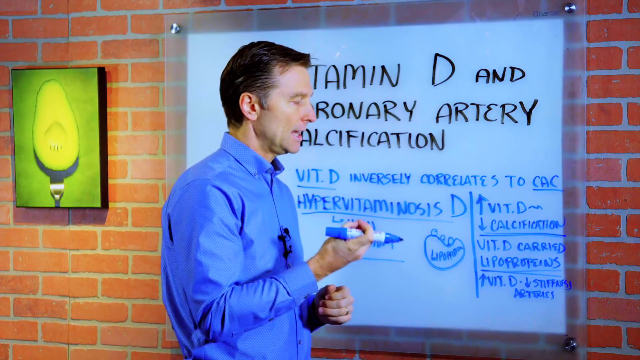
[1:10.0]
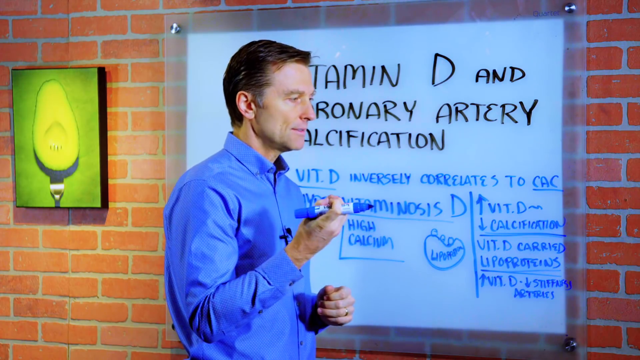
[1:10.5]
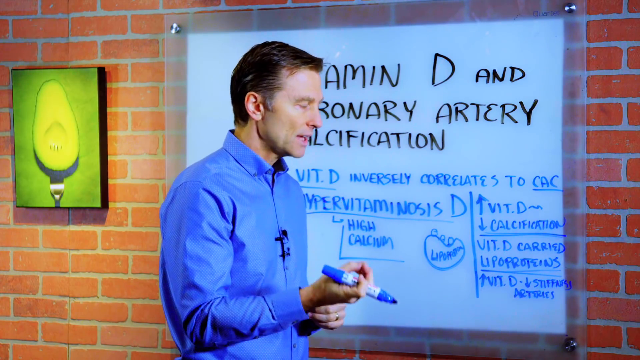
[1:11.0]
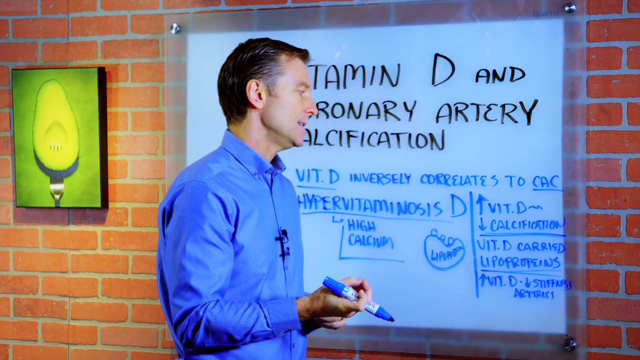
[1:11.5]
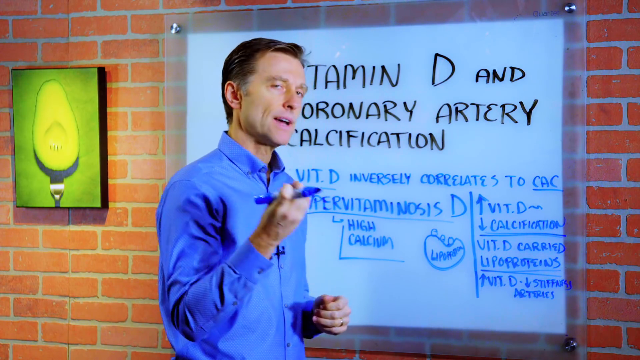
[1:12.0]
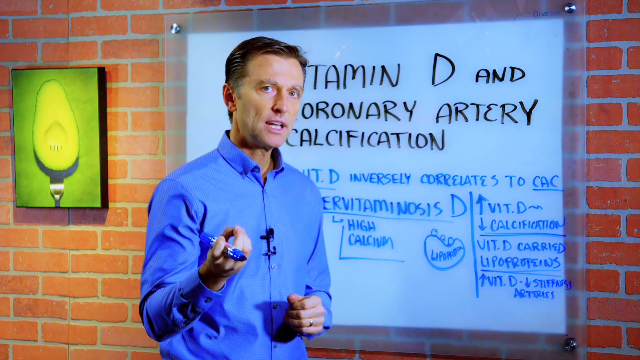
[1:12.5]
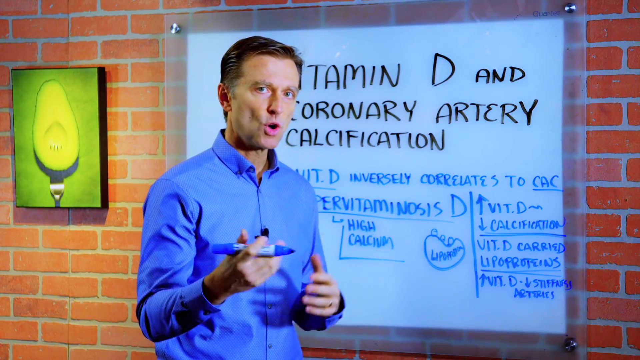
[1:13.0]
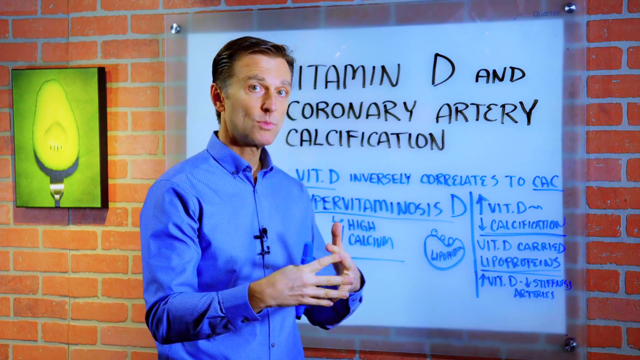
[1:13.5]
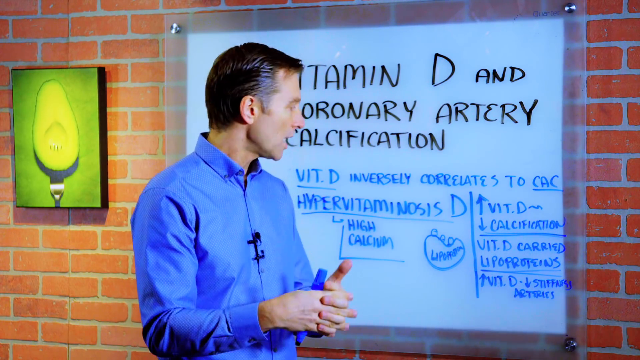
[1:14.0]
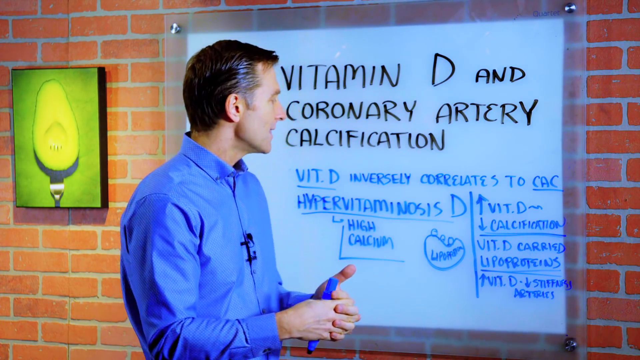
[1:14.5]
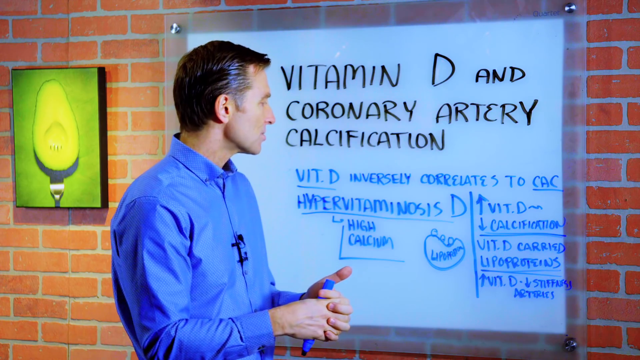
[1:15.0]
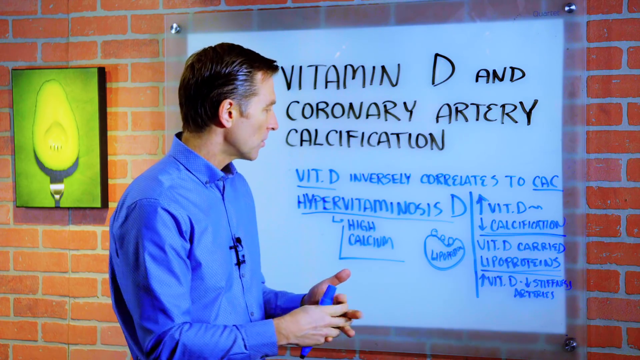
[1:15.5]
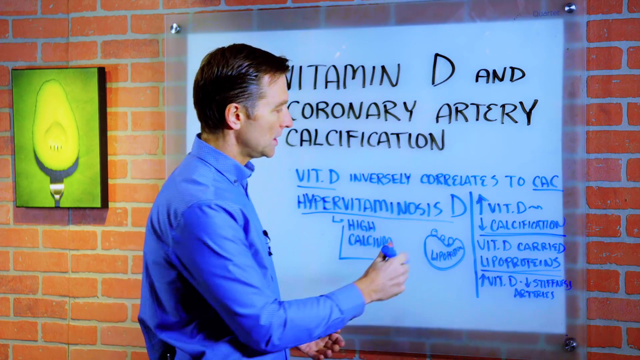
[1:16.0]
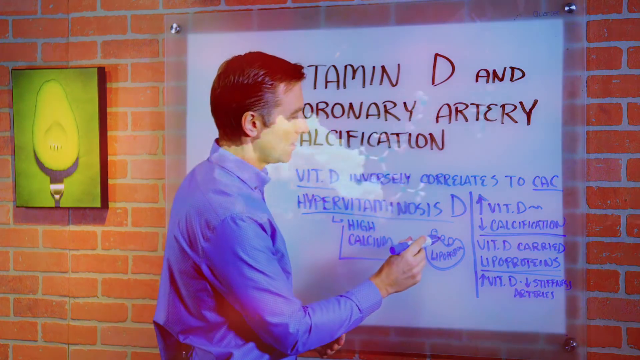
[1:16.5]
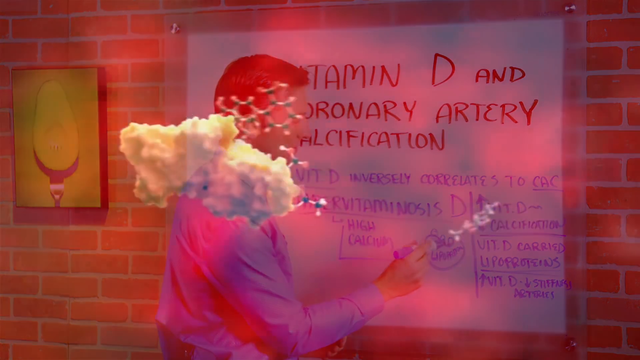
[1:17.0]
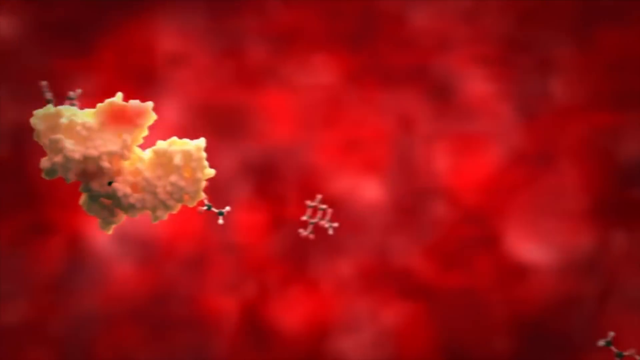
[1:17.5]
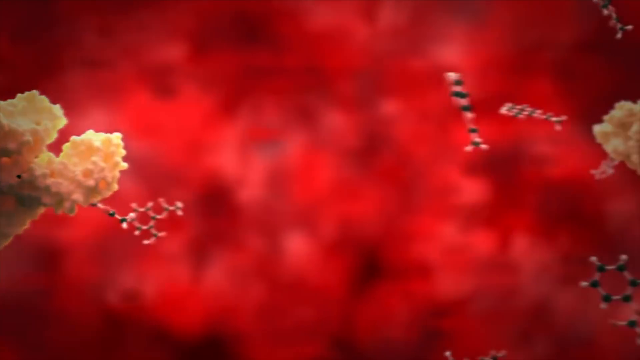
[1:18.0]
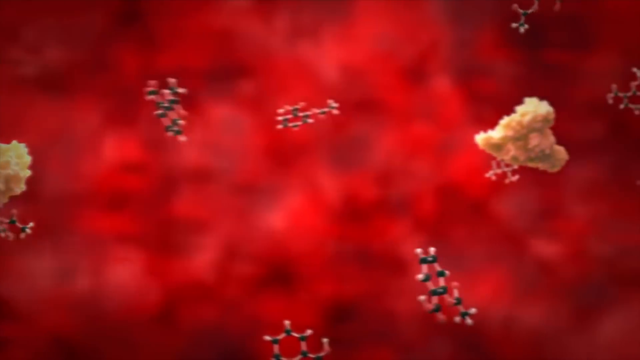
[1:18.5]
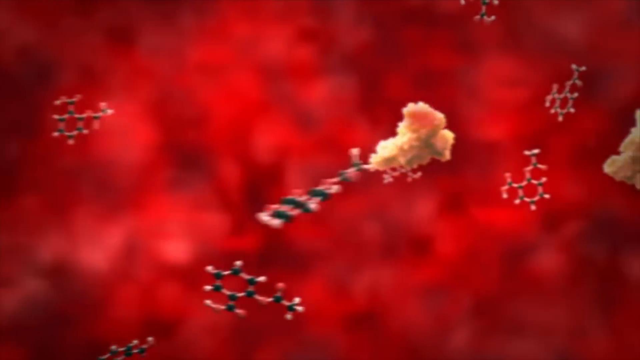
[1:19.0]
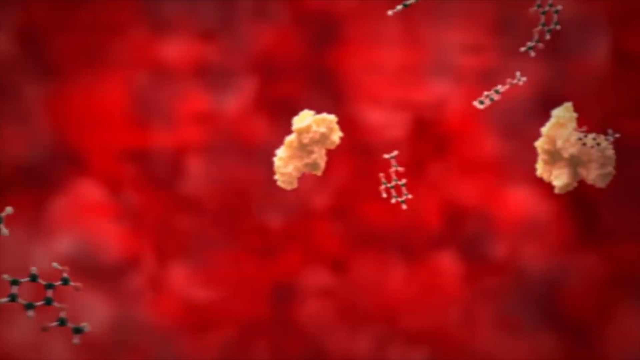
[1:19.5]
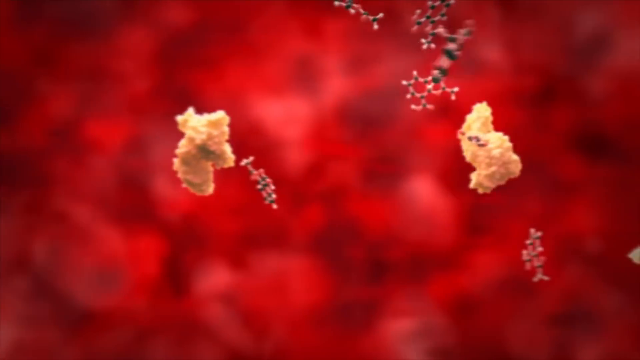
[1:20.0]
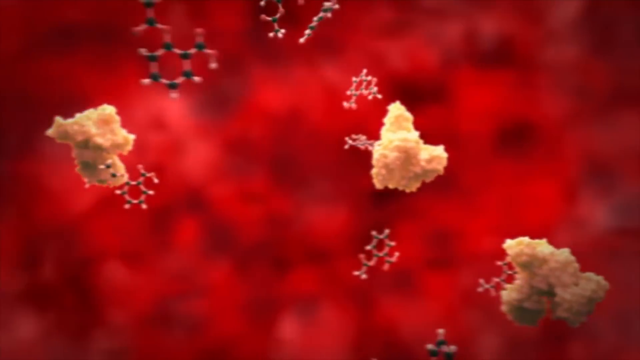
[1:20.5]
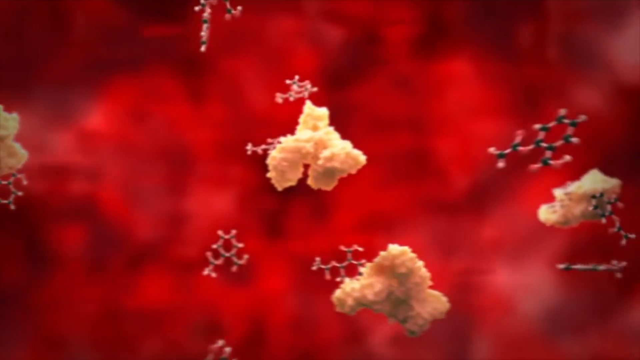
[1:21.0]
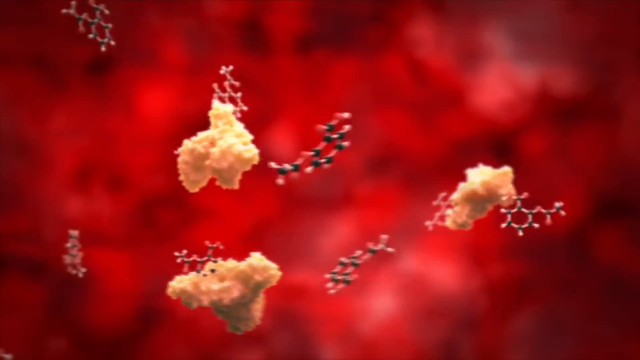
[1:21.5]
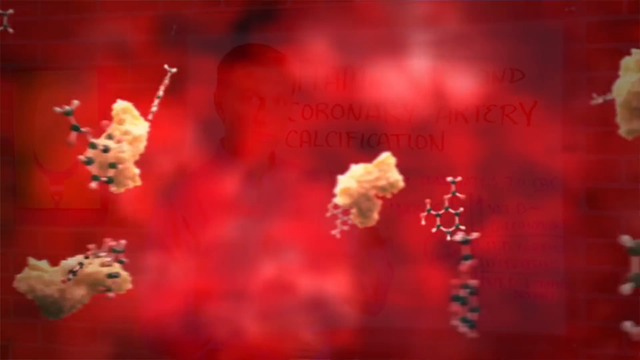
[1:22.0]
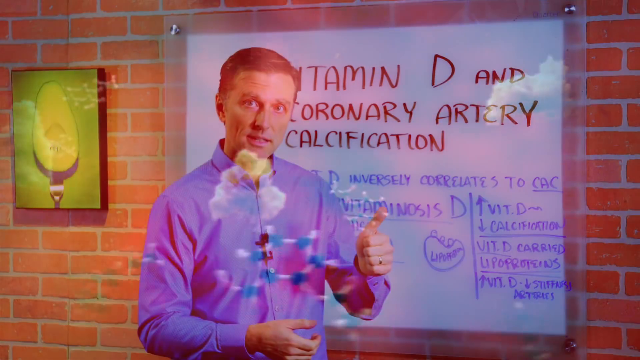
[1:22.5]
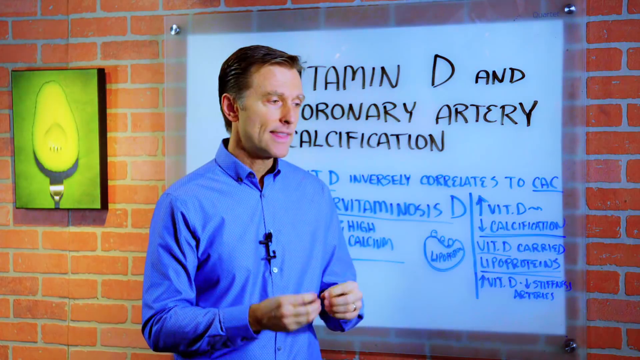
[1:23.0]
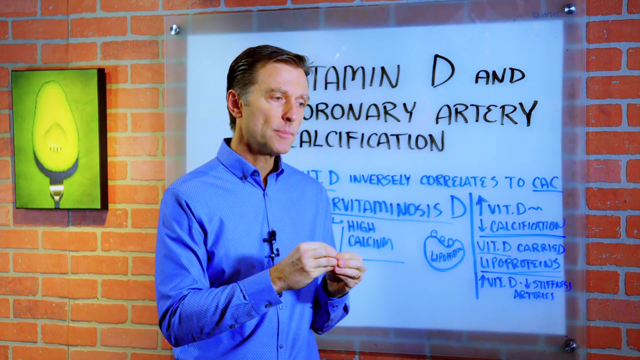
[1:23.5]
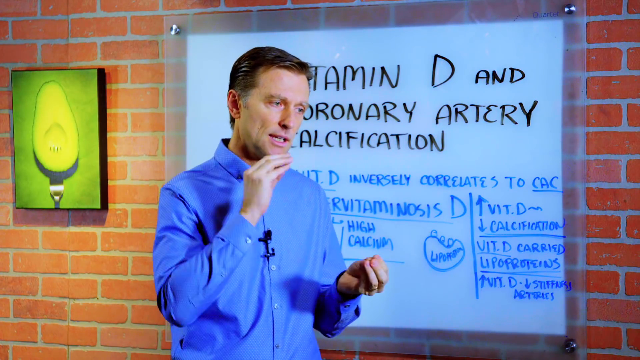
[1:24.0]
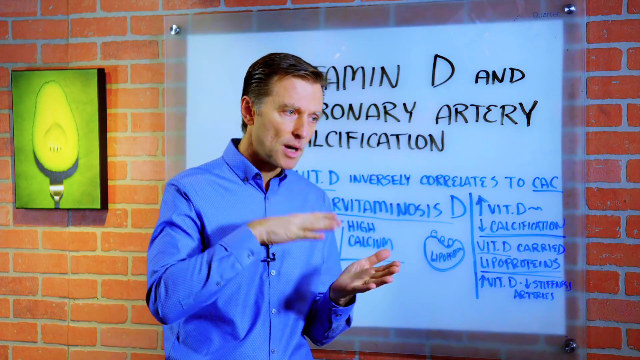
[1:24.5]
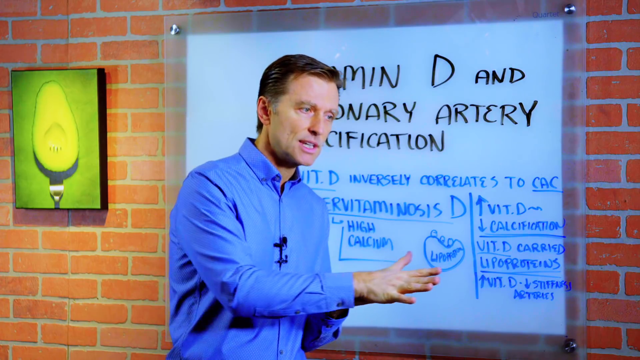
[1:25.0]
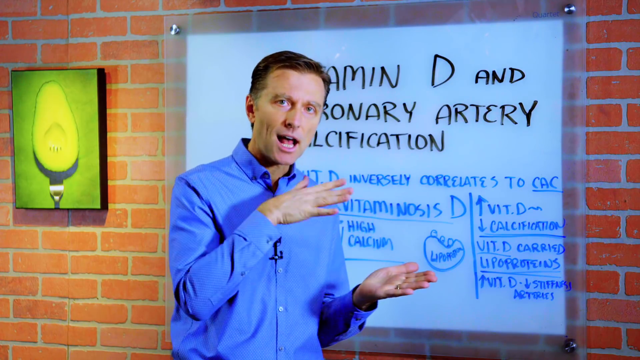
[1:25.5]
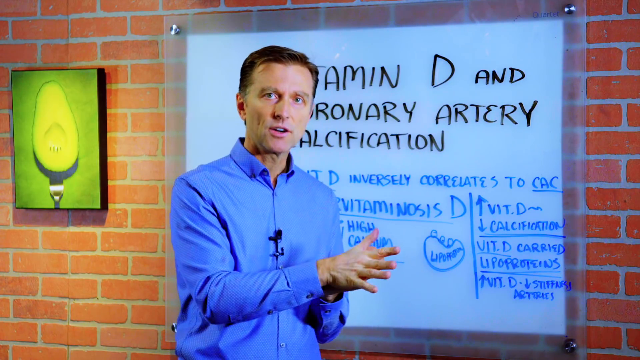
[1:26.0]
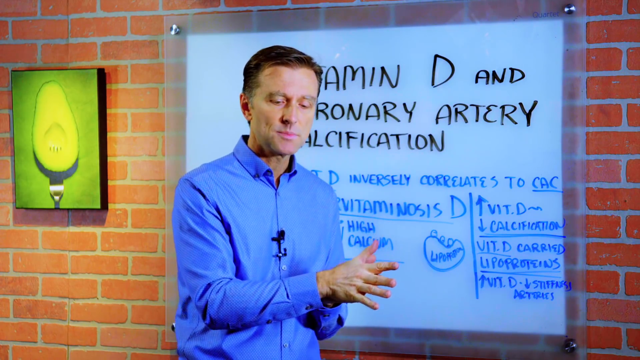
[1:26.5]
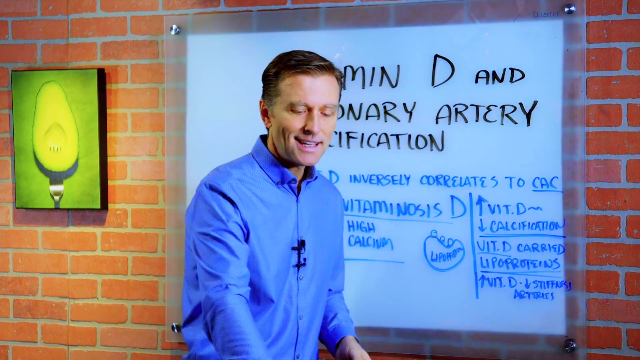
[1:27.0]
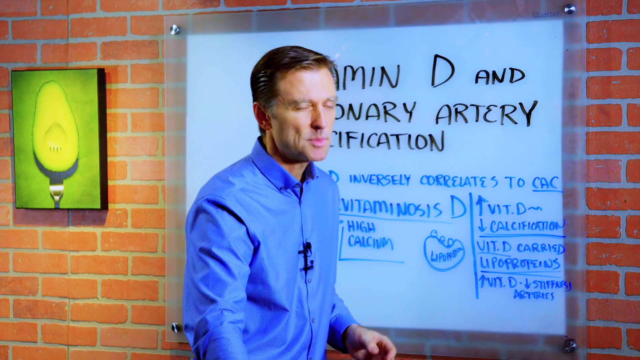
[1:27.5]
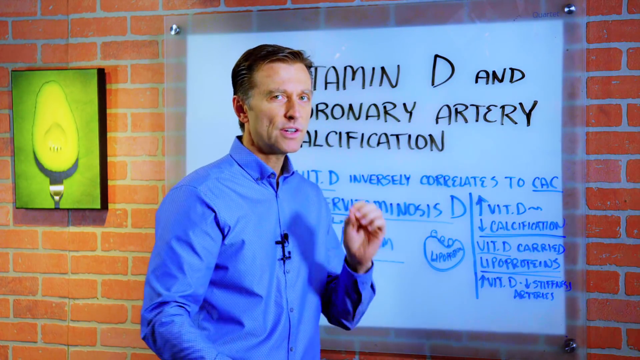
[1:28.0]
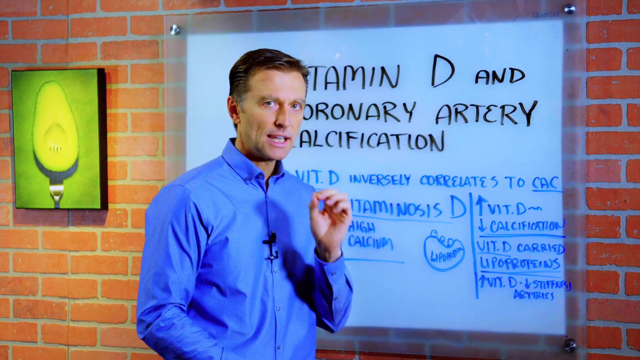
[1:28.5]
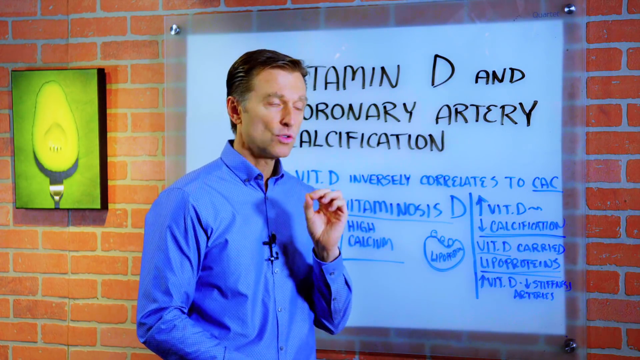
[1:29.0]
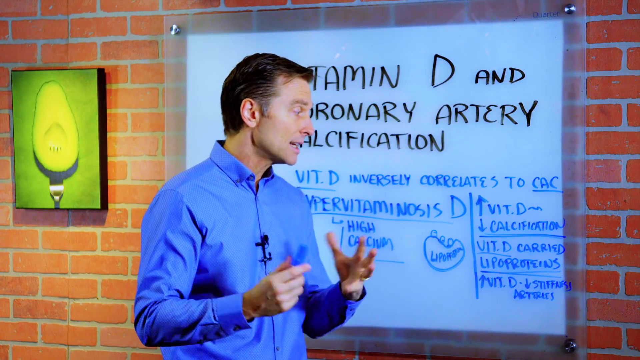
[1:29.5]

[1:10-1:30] A picture hangs on the wall to the left of the dry erase board. It is not a person with an avocado head but a shadow box or soft canvas, beveled so it sticks out from the wall. It shows half an avocado with a recessed spot where the pit used to be. A fork sticks through it, its four prongs faintly visible, in what looks like brushed nickel. The avocado is yellow with a green outer part and looks almost airbrushed in places. Screws or some kind of round metallic things, apparently bolts, hold each corner of the dry erase board. The board's border is translucent, a clearish white, and the brick can be seen through it. The video then moves into a reddish area with crisscrossing shapes, with two beige-yellowish clusters in front that almost look like popcorn. The view pans to the right, showing more of the same: three little pink sticks come together at a black center, all connected as they float through. It then returns to the man, who talks and clusters his hands together, apparently to show how they all fix in the center of the model.